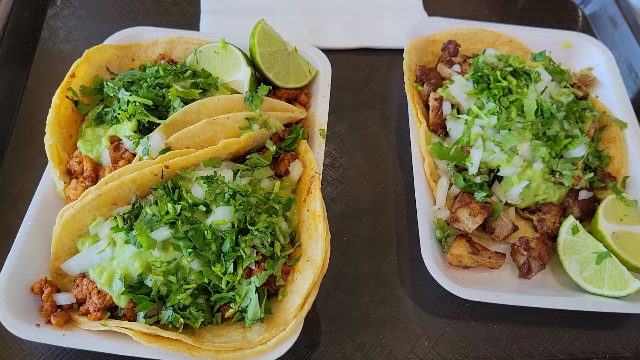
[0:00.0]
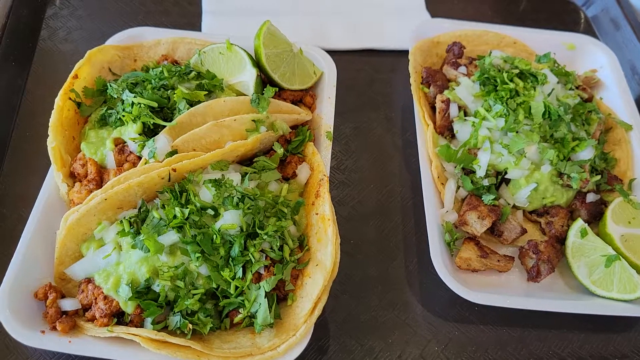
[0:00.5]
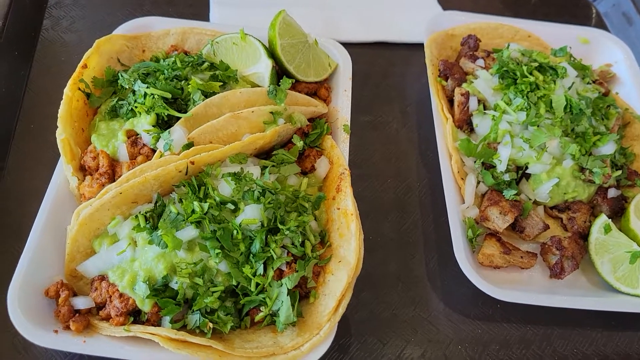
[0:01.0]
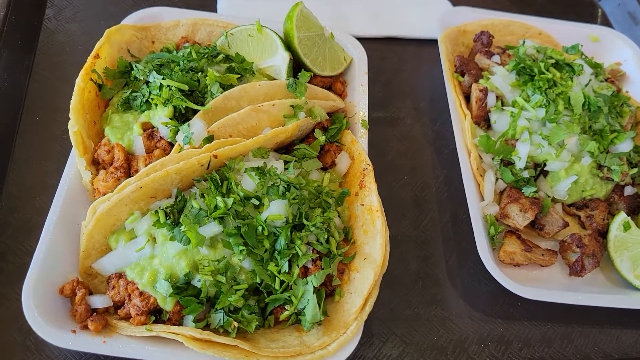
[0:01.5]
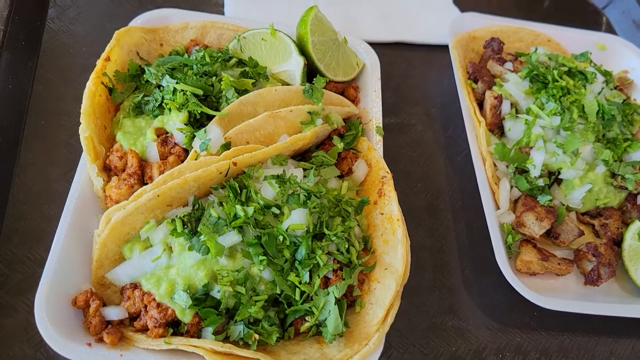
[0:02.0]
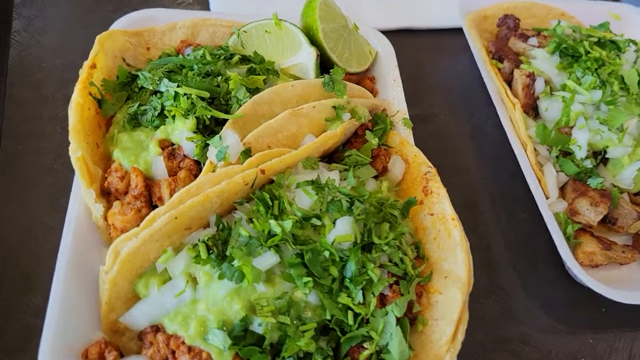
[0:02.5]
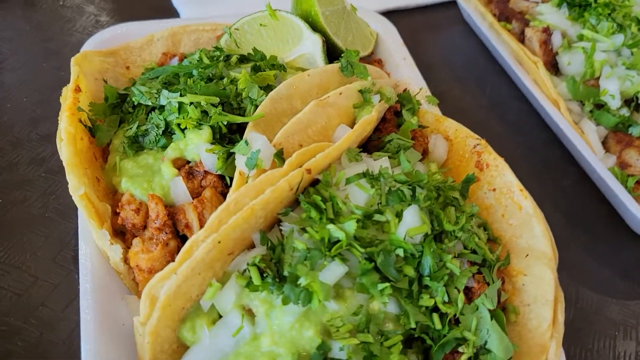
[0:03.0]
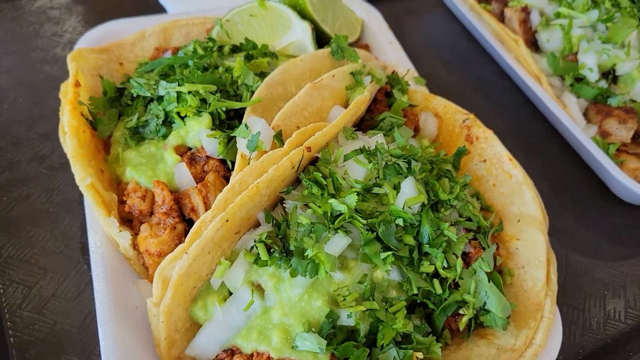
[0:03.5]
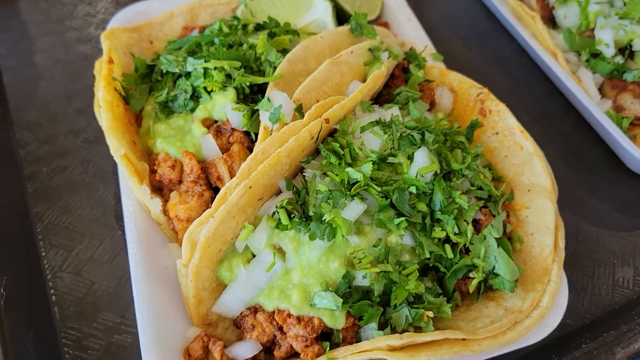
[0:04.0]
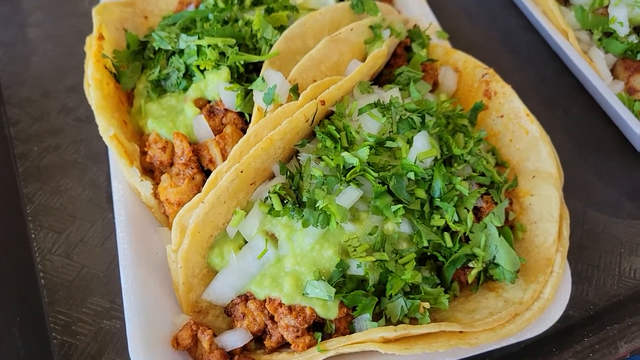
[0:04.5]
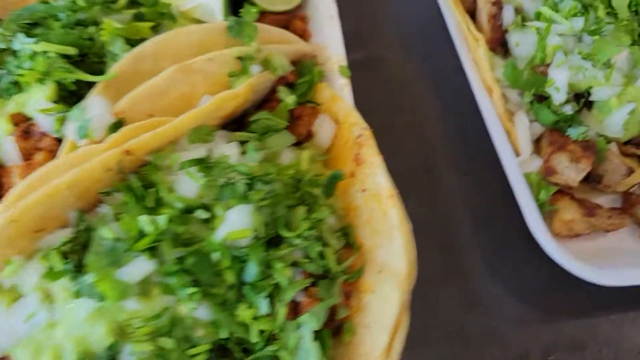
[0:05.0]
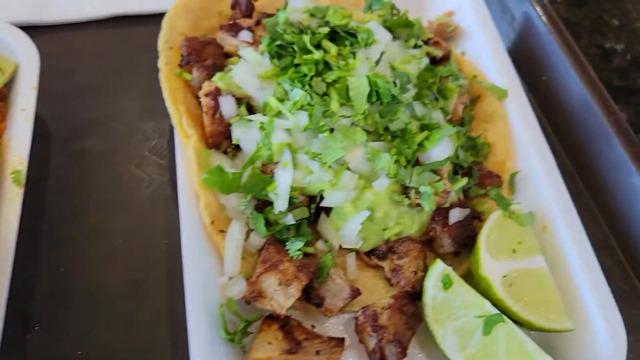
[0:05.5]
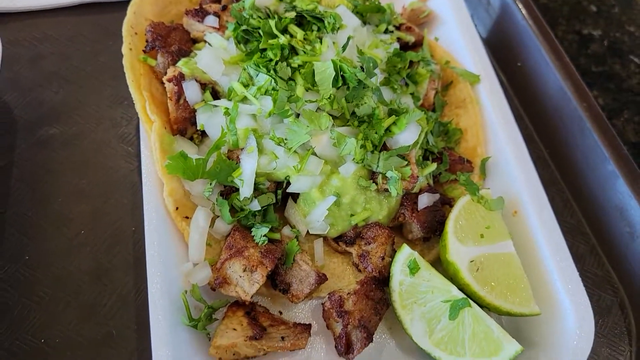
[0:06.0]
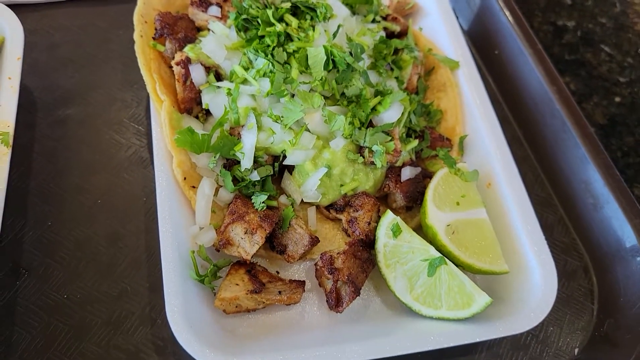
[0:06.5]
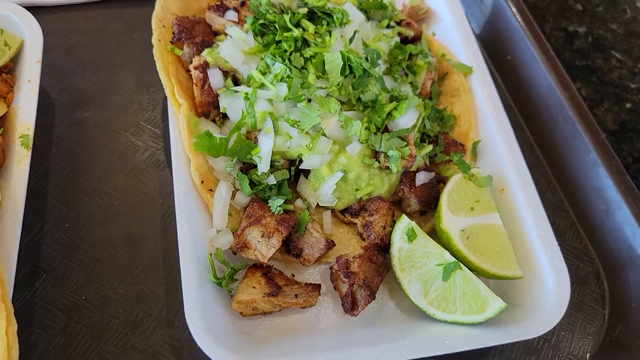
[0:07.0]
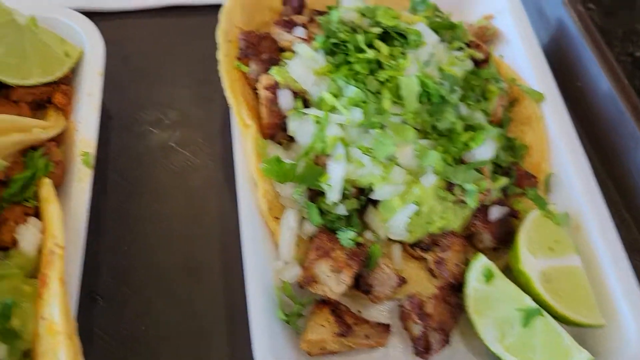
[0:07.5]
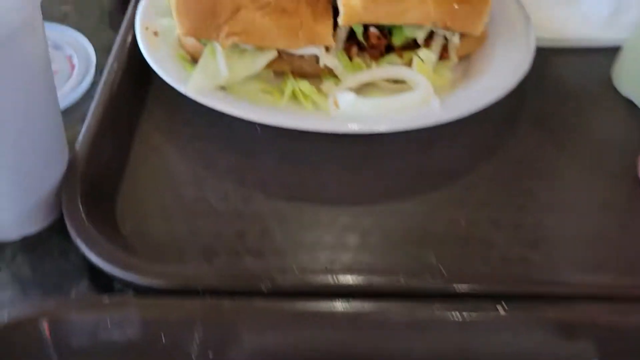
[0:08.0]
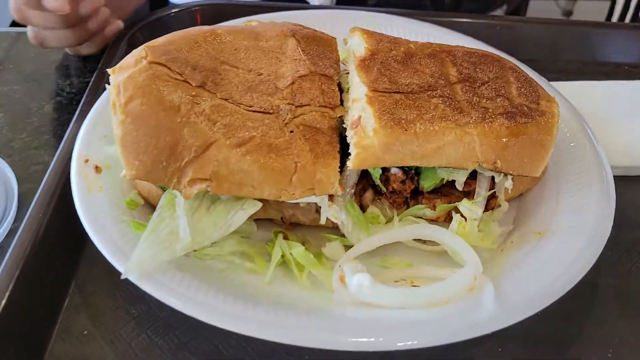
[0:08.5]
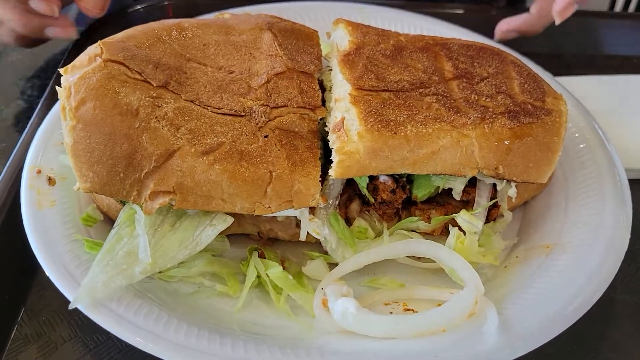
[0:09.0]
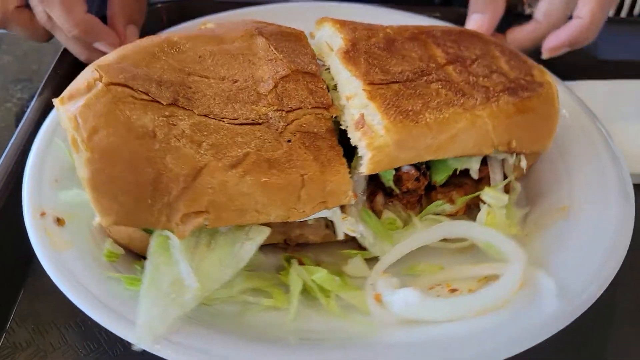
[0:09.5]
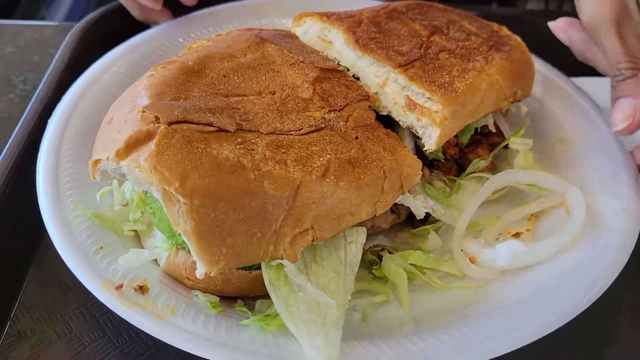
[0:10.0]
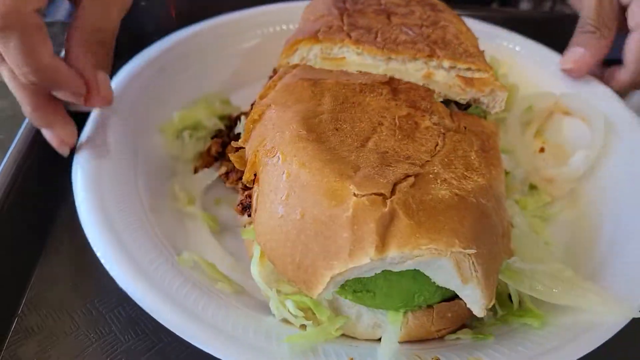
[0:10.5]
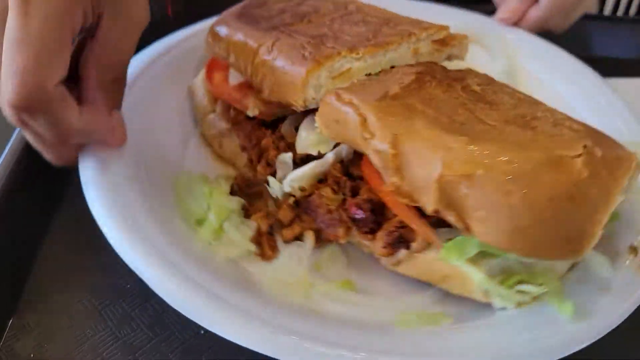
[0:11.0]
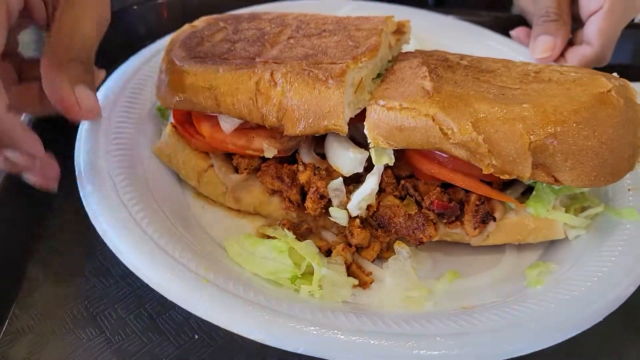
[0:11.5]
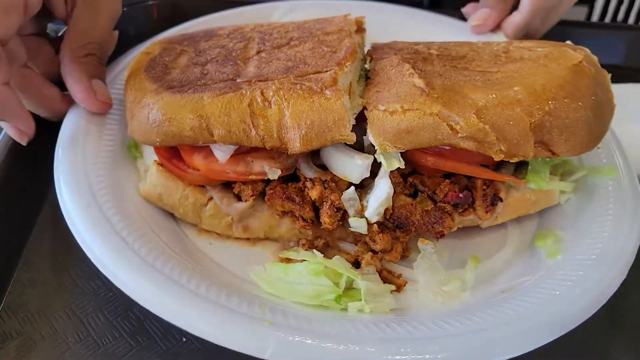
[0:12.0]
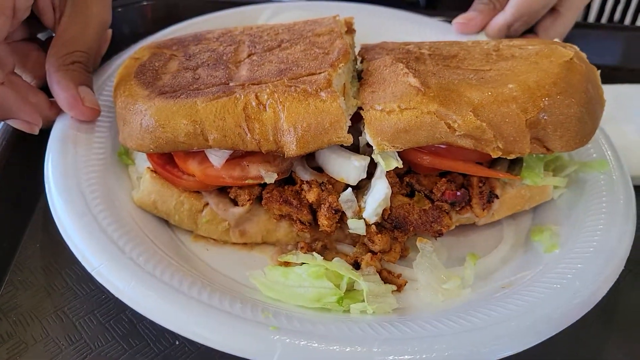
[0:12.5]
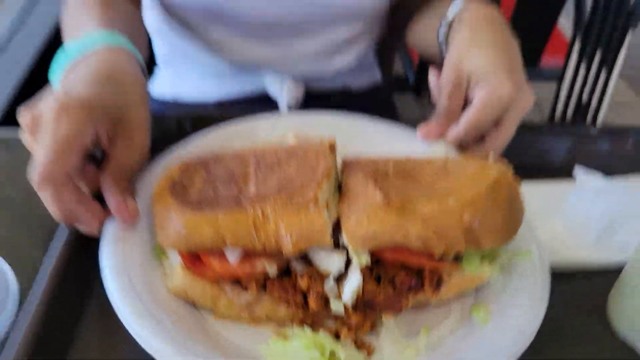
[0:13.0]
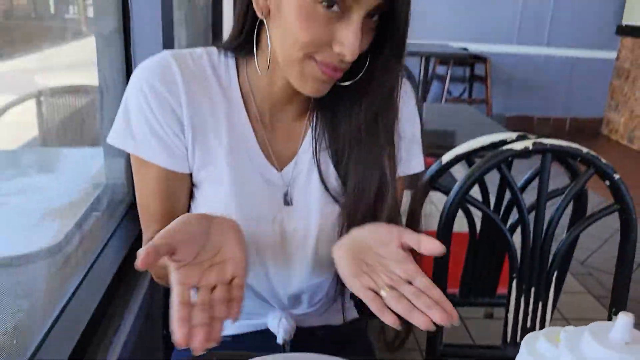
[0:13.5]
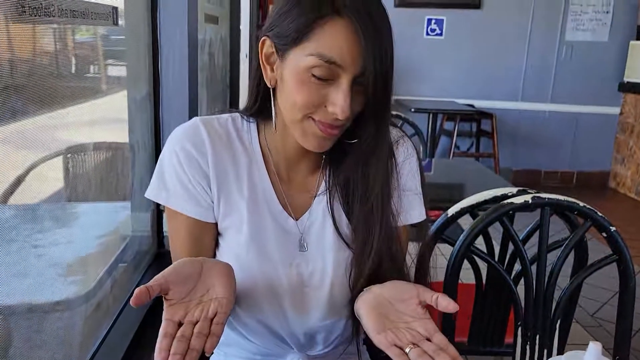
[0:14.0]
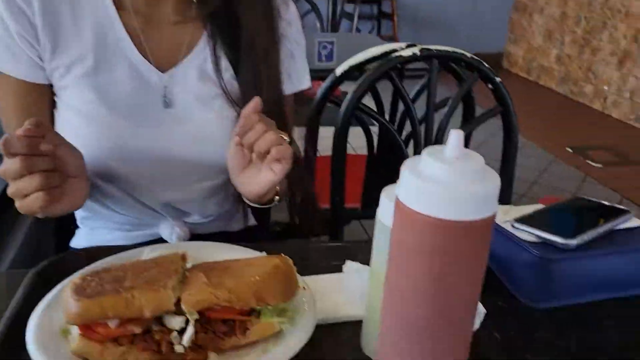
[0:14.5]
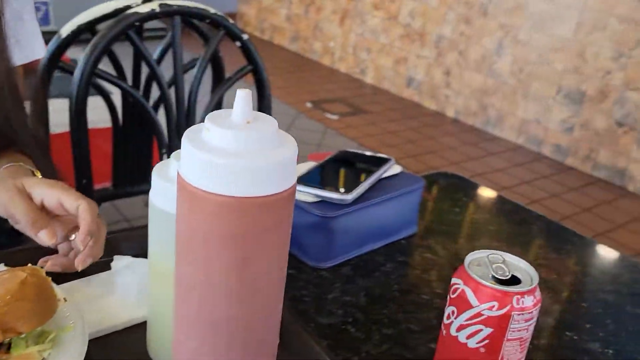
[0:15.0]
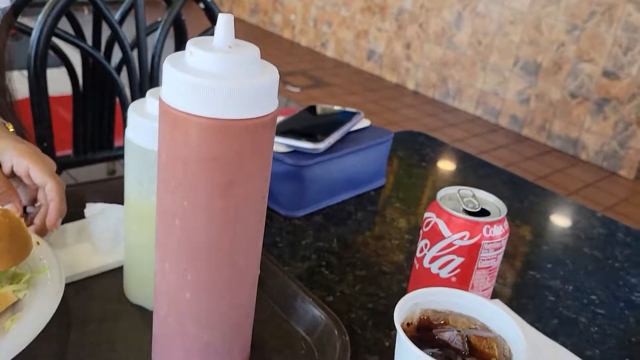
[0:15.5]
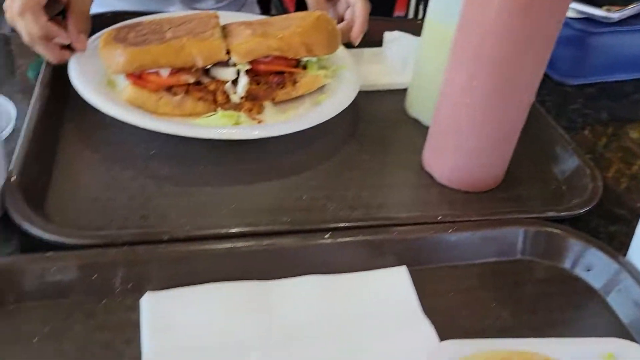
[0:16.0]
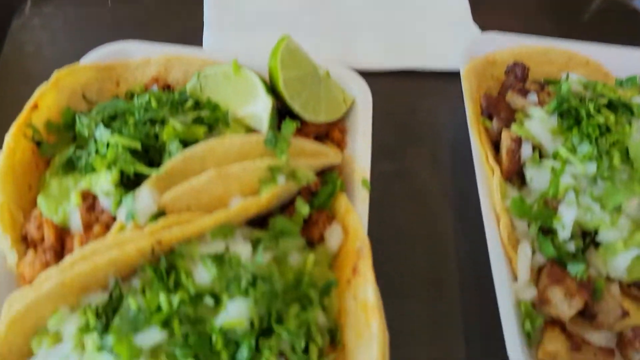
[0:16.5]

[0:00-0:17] What appear to be various green vegetables are on top of some meat or potatoes inside some kind of brown wrap, with what look to be cut-up limes on the side, on white rectangular plates on a grey table. The camera zooms in on both plates with these ingredients. It then moves to another location in the same area, showing what looks to be a long sub roll cut in half, filled with what looks to be meat, lettuce and some onion. The person spins the plate around to show both sides; on the other side of the sub, tomatoes are visible, and some of the meat is spilling out of the sub, which appears to be on a white paper plate. The camera then goes upward, showing a young lady with long black hair in a white top, apparently in some sort of restaurant. She is seated on some black chairs and has her hands out pointing to the food. The camera then turns, showing some of the condiments, and a can of Coca-Cola and the lady's phone are also visible on the table.